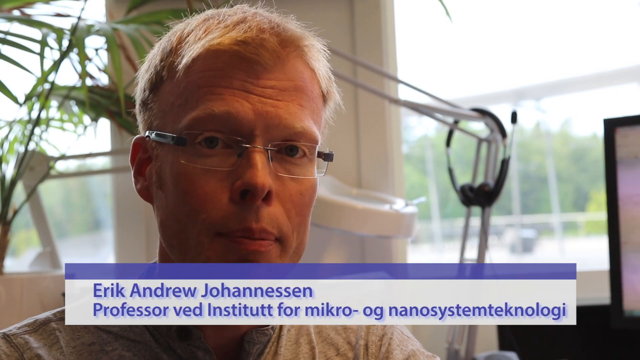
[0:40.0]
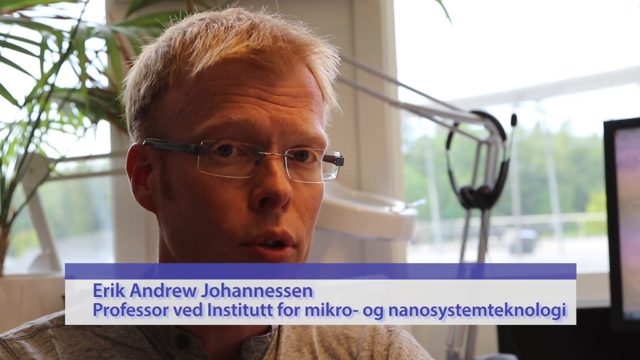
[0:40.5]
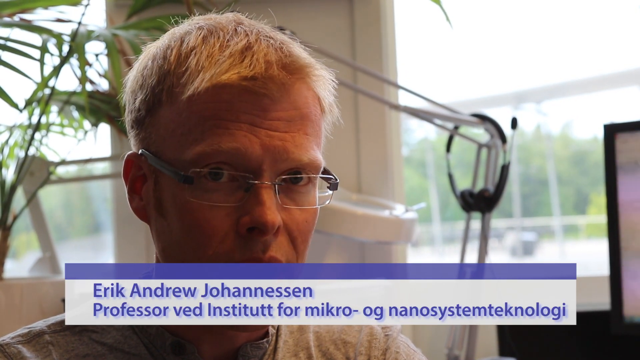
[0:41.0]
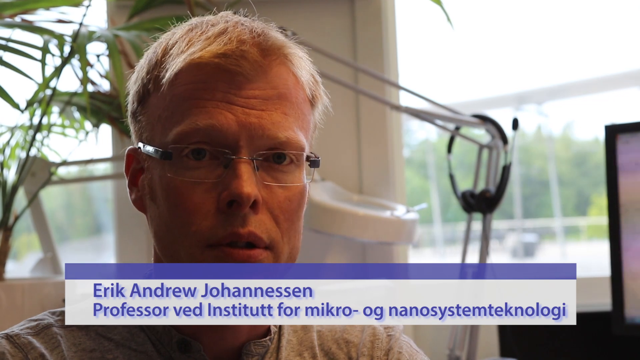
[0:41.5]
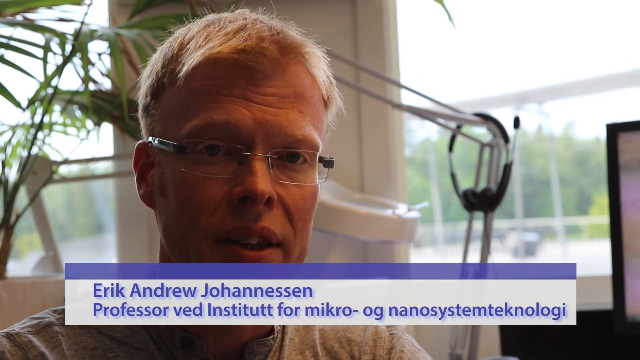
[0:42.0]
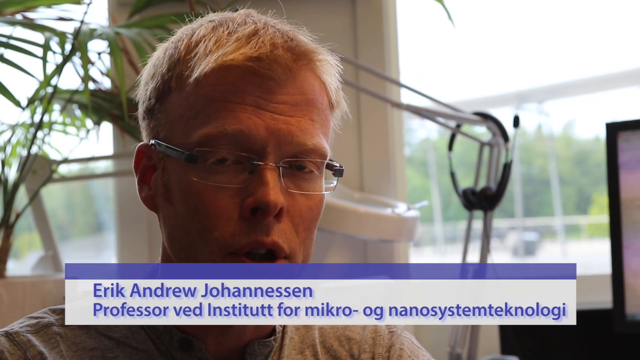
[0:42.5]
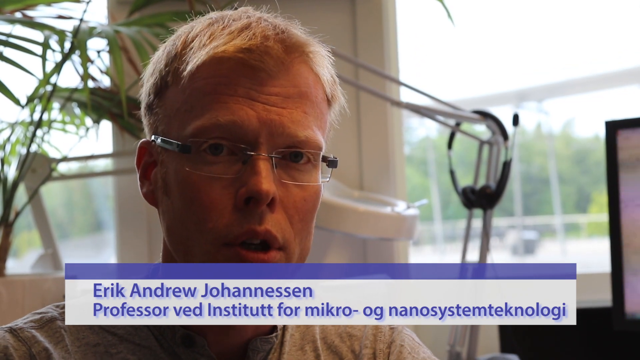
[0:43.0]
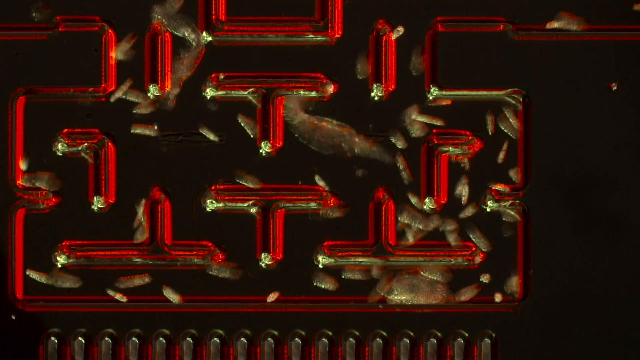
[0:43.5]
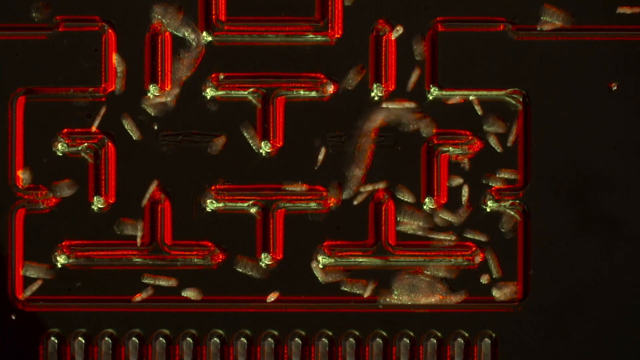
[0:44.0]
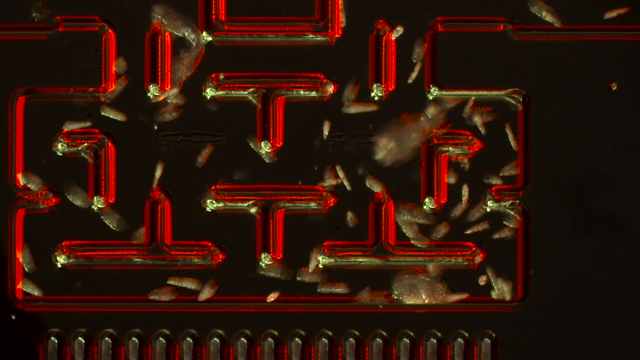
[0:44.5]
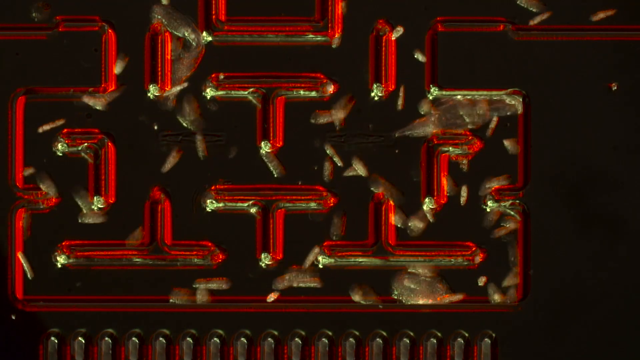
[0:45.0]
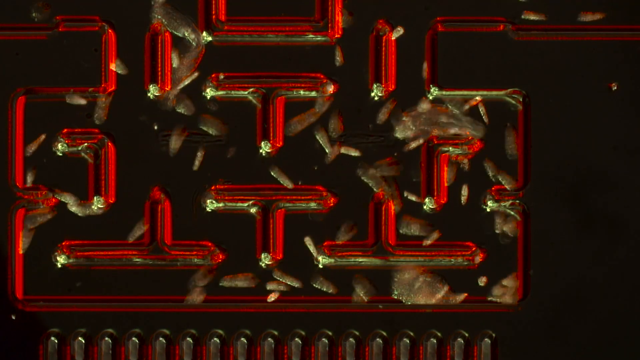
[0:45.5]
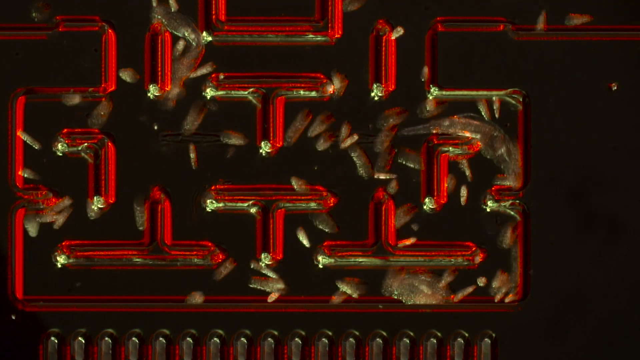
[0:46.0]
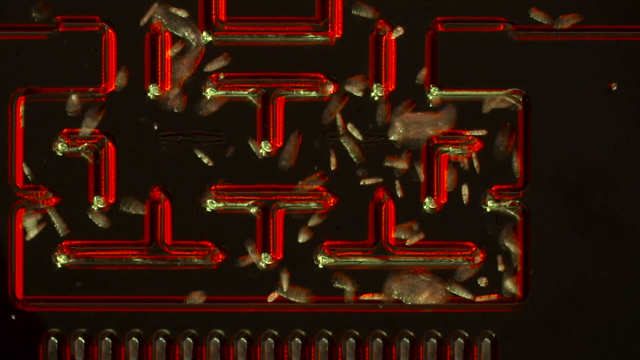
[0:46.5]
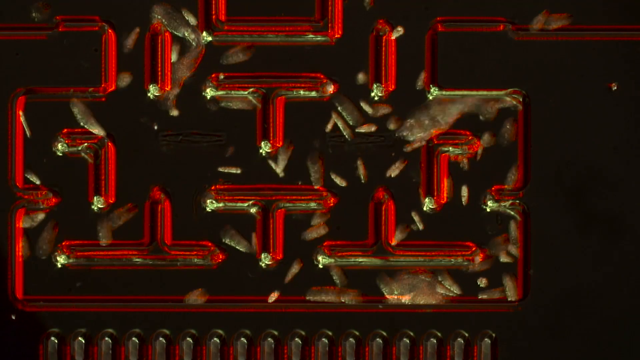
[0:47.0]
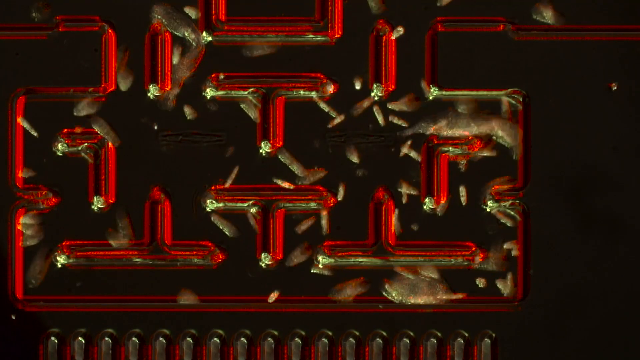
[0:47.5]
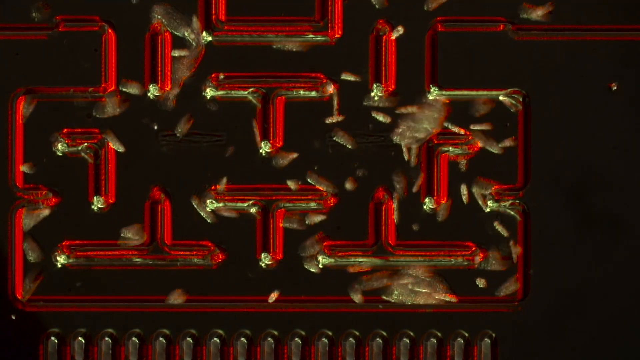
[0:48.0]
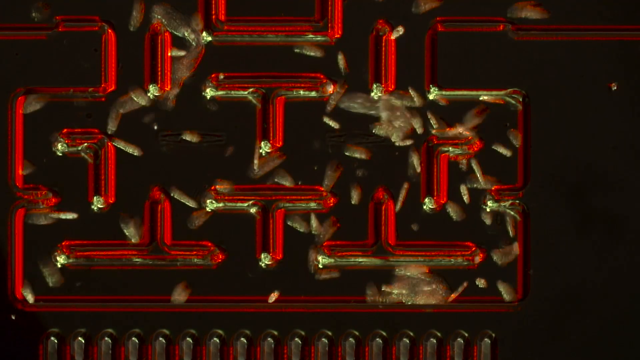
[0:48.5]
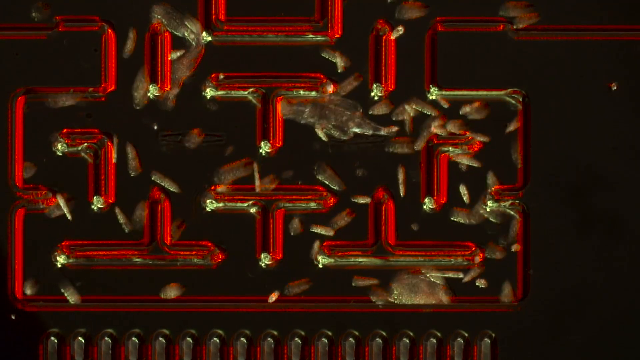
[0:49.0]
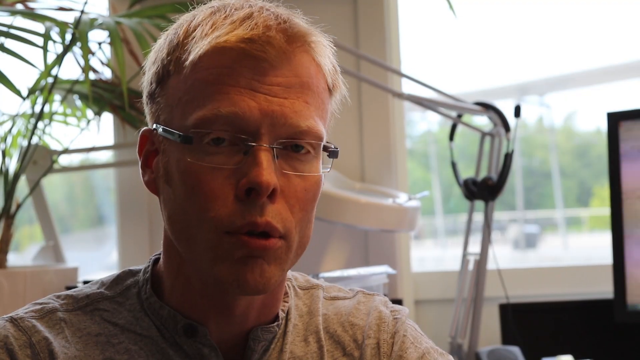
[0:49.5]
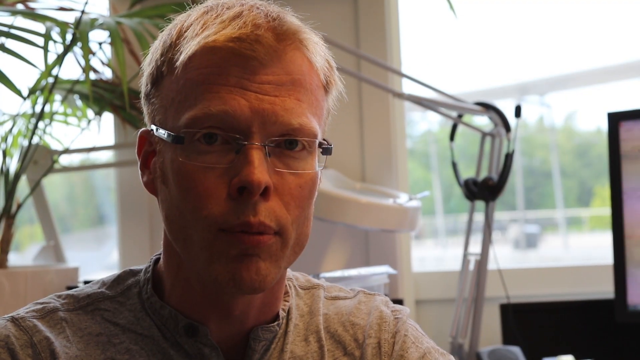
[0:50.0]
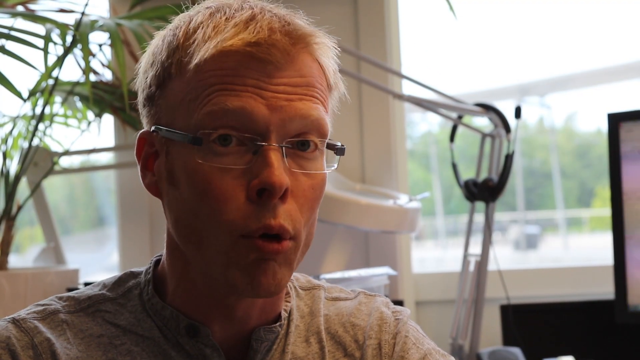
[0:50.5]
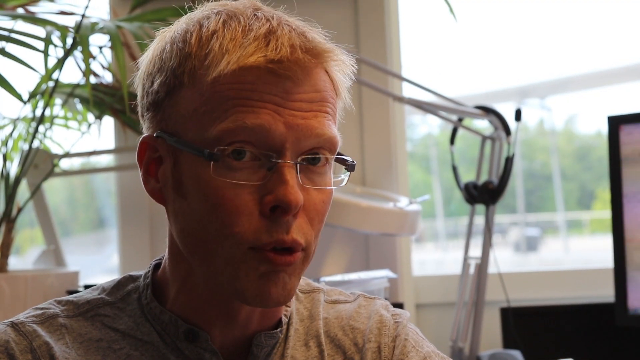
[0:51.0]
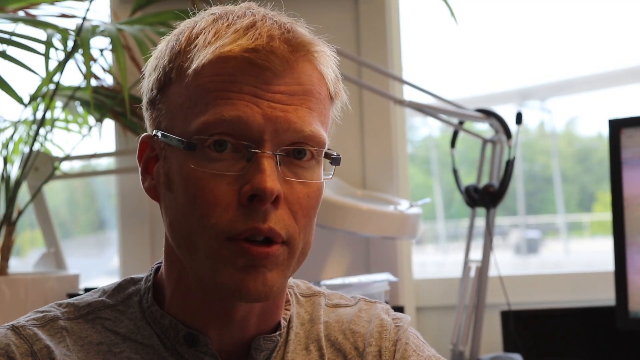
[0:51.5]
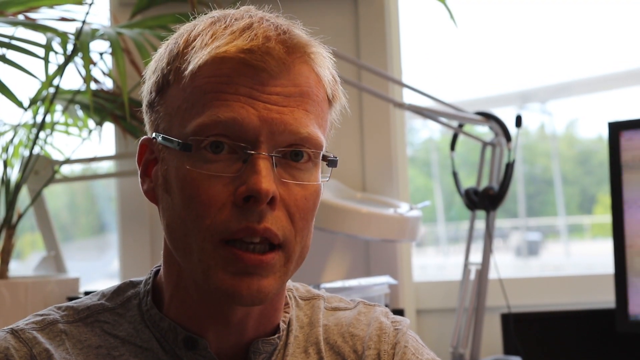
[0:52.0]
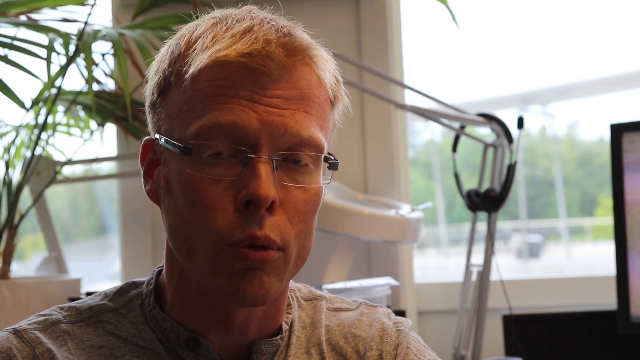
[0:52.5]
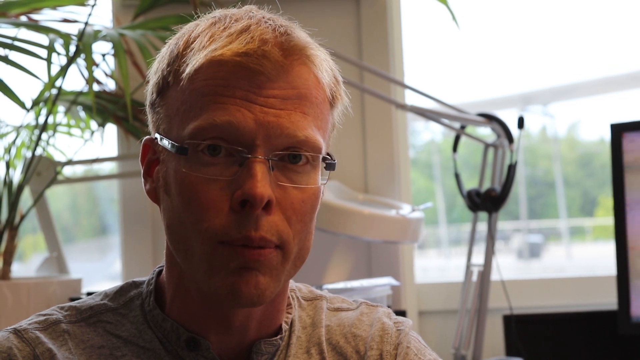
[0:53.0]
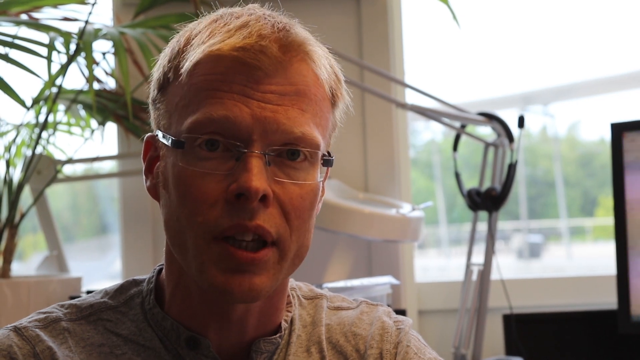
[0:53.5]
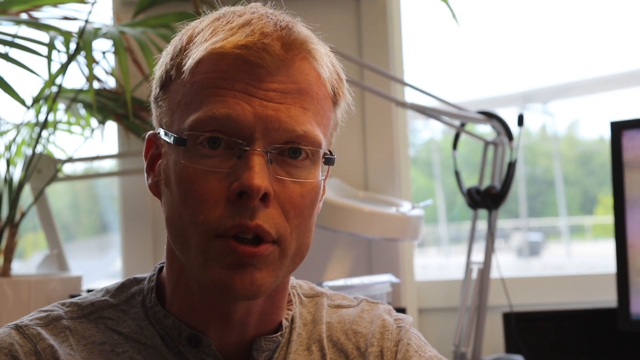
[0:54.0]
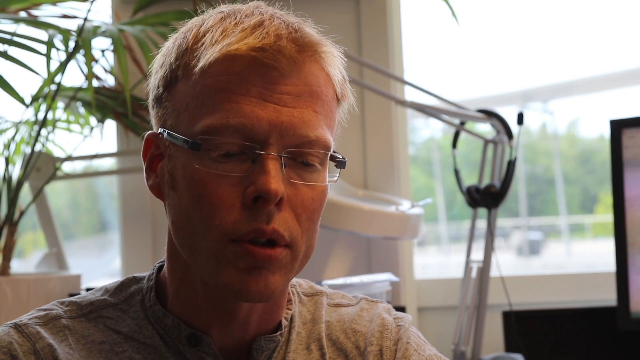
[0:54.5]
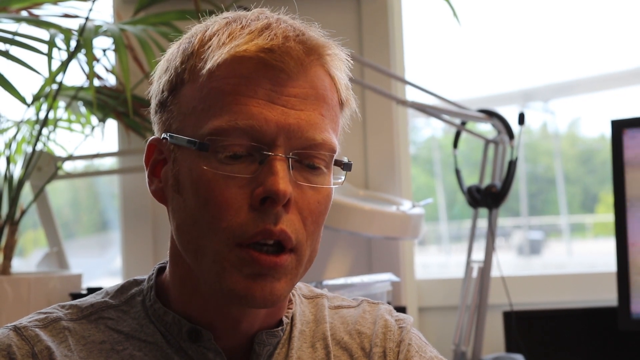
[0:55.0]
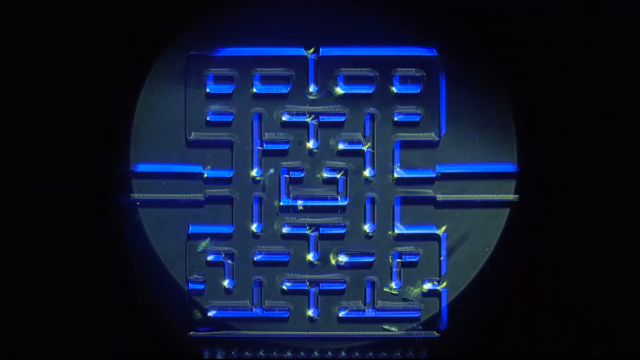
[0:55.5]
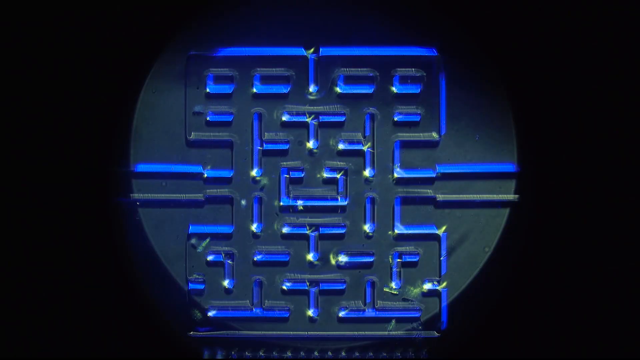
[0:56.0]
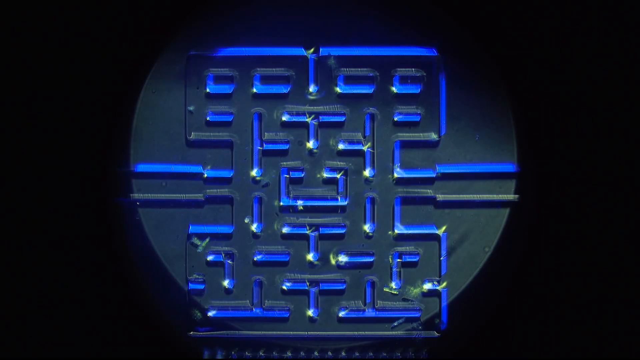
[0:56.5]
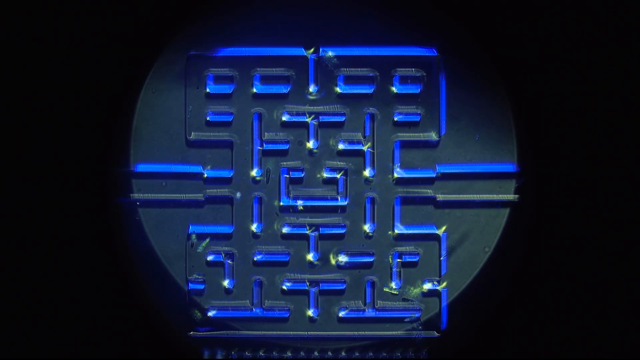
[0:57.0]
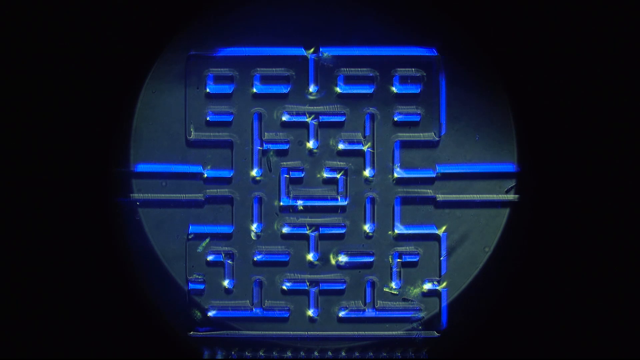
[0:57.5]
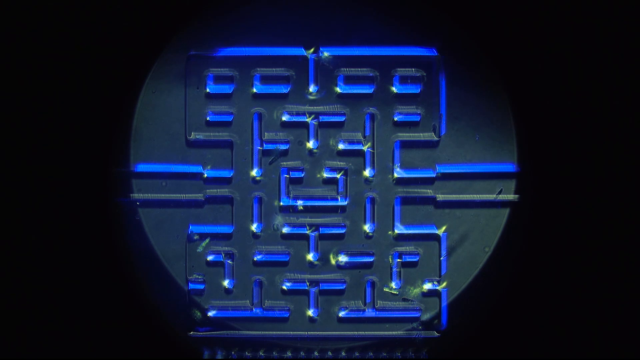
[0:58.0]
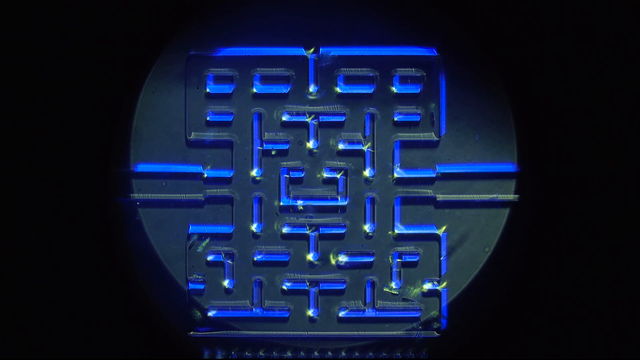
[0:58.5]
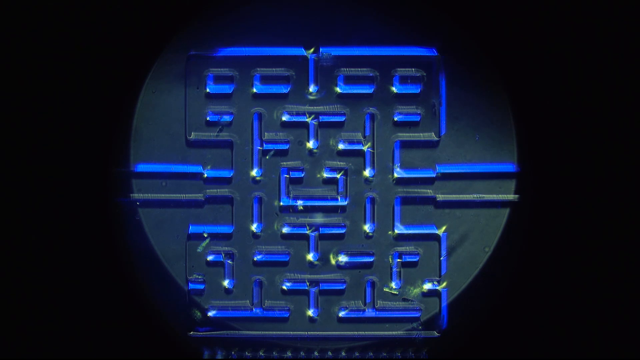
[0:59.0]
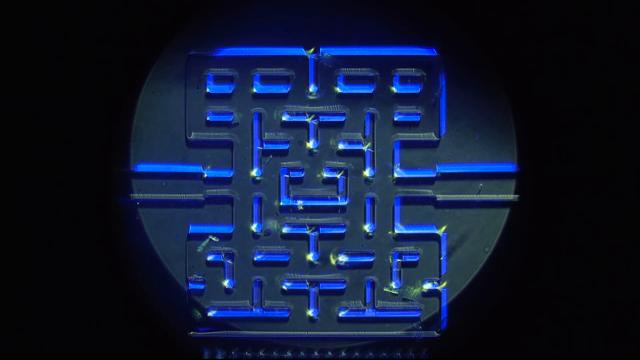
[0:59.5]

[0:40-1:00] The scientist speaks while looking directly at the camera, blinking rapidly; he briefly closes his eyes, then widens them. He seems to finish speaking for a moment, and the view transitions to another Pac-Man-like maze with glowing red walls. Shapes move all throughout this maze, including larger objects that appear to stretch out; some try to round the corners but appear too large to get around them. The video returns to the scientist, zoomed in directly on his face as he keeps speaking to the camera, not gesturing with his hands, just looking back and forth slightly. Behind him is a white wall with windows on both sides and what appears to be a small potted plant on the left. Next is another maze-like structure that appears to be shot through a small porthole view, with very small shapes moving around inside.